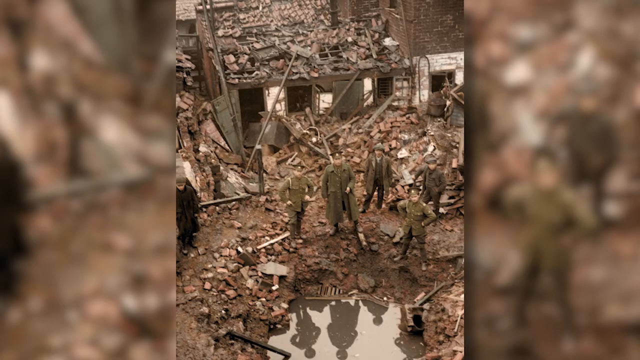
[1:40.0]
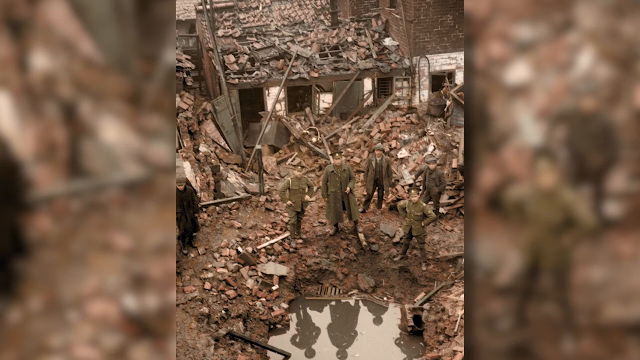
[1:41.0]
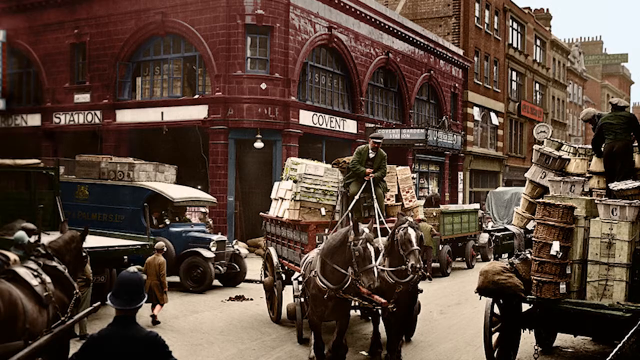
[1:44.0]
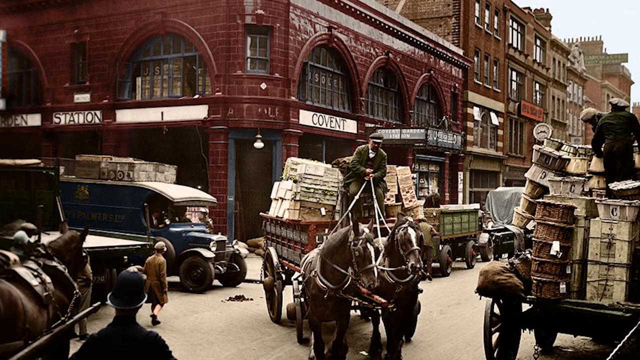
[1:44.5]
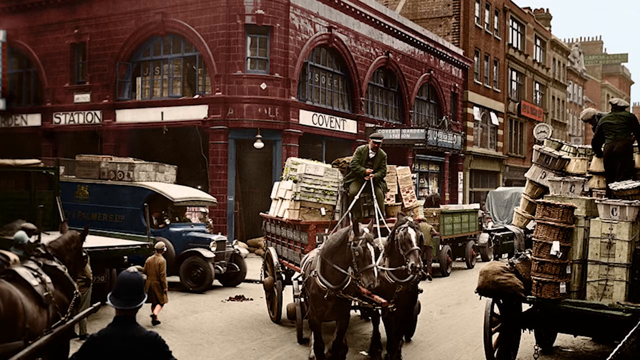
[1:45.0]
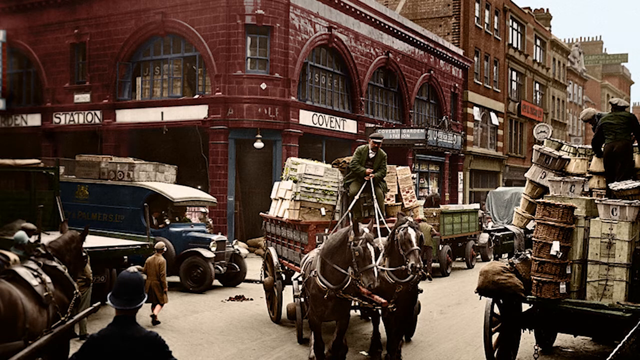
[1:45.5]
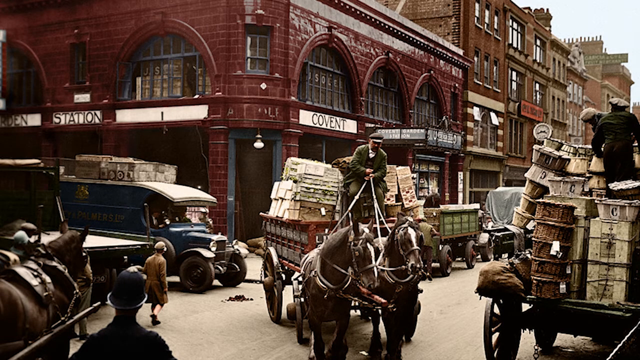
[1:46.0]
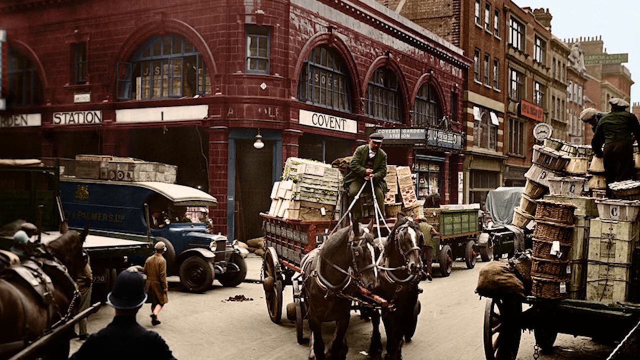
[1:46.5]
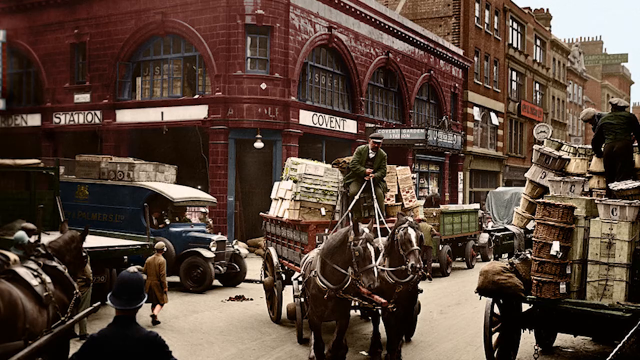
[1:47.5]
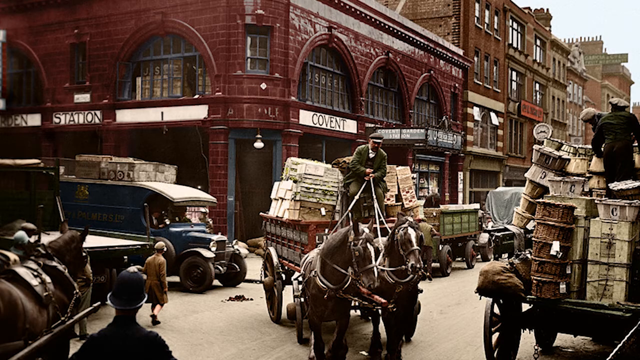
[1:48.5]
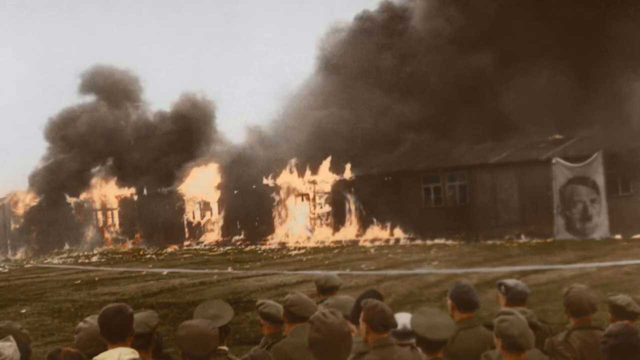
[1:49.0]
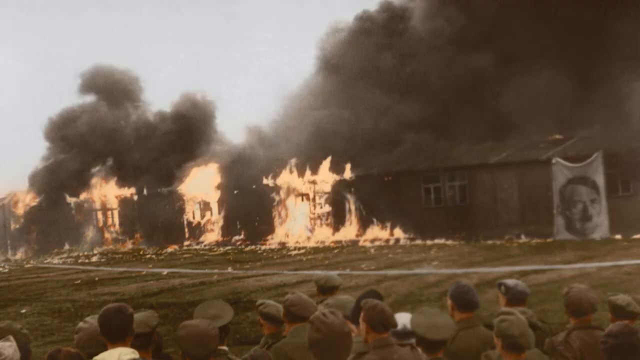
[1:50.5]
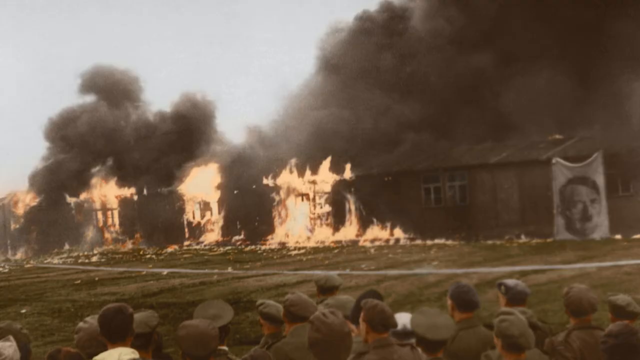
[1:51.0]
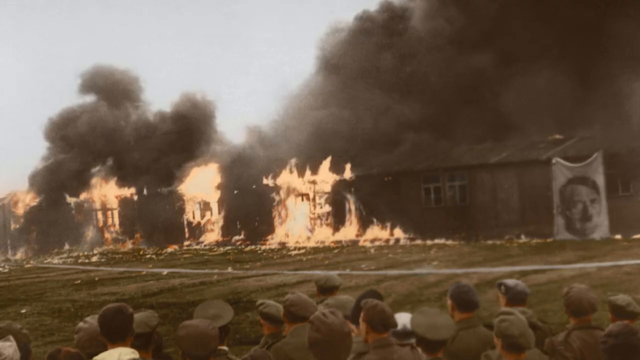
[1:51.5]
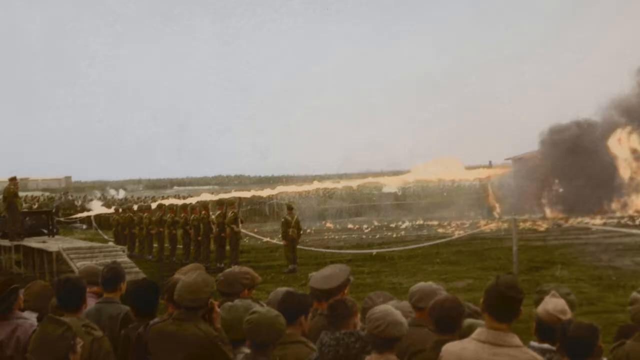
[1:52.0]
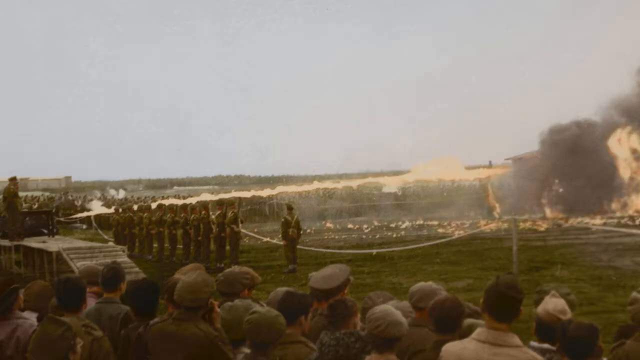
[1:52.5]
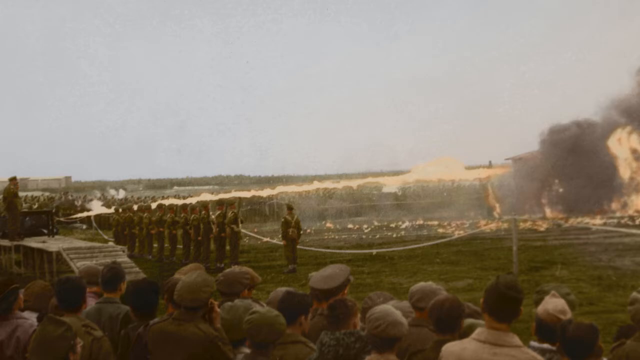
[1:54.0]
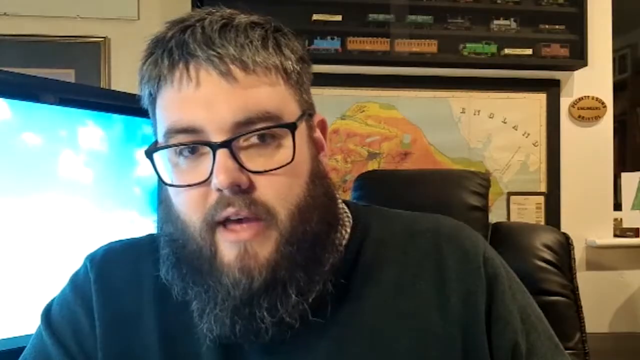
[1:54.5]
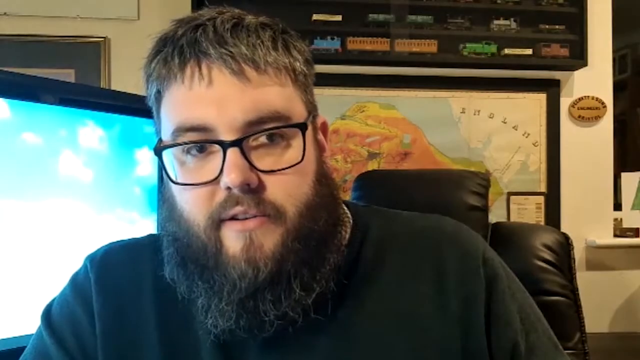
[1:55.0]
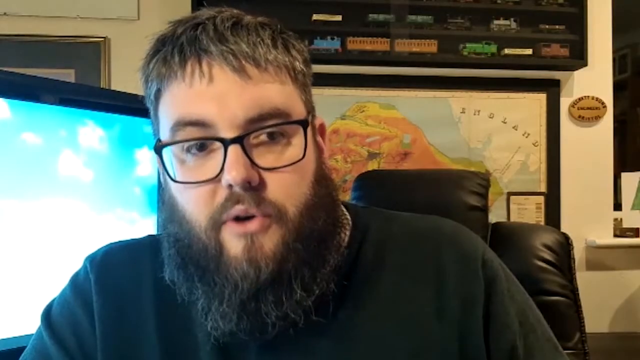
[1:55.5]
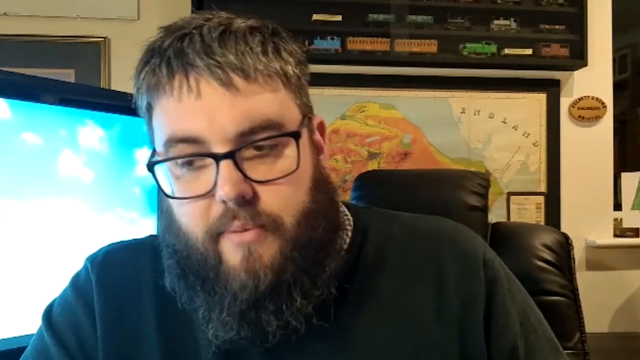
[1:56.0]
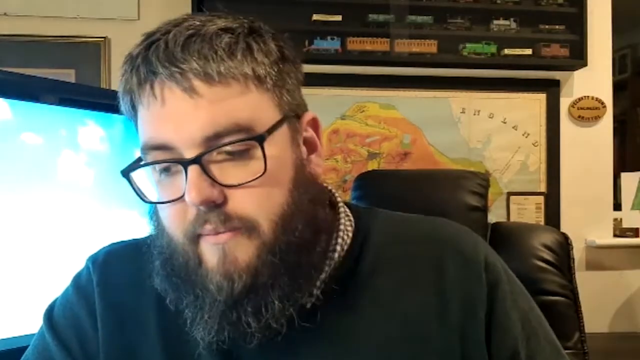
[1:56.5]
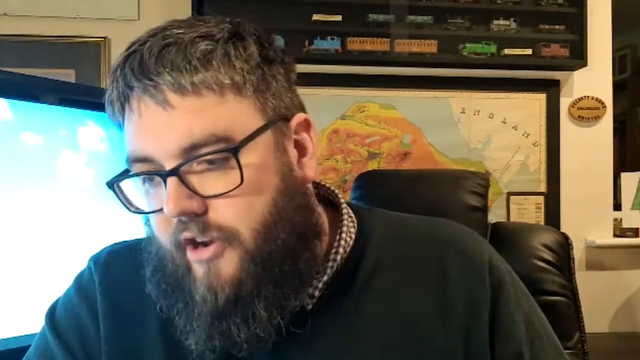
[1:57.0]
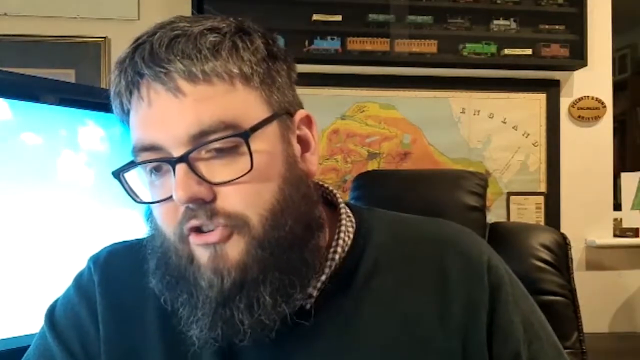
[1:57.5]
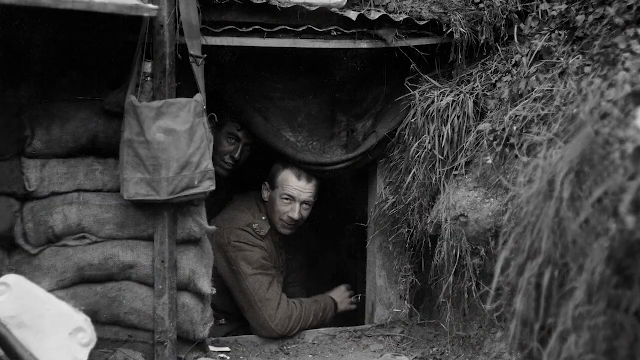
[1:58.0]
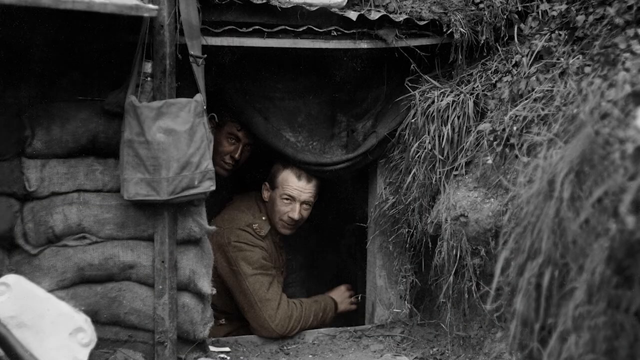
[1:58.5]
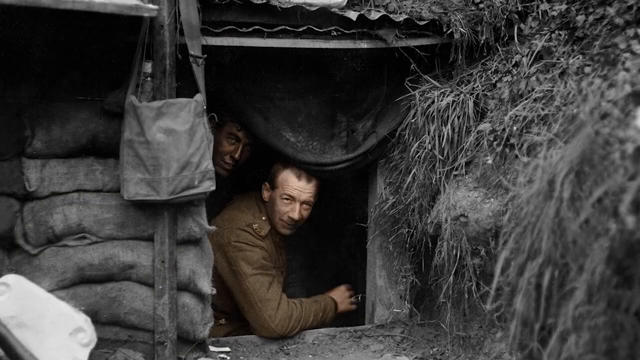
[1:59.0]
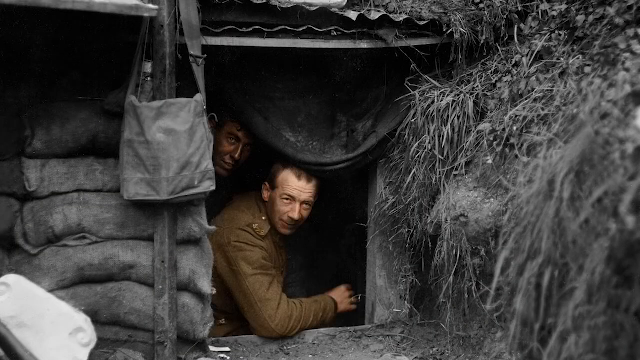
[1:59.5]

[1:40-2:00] A black-and-white picture goes into color, showing two people in what looks like a cave or some type of makeshift building. Devastation from what may have been a bombing is shown: a destroyed building or house is still standing but has a lot of debris on top, its roof is gone, and there is a lot of wood and what looks like brick. Four or five people stand facing the camera, wearing green outfits that could be military green. Next is a color picture of a reddish building with "convent" on it, with horses and buggies, a few cars possibly from the 1920s or 1930s, a wagon being pulled, and other buildings on the left side of the street; something says something "station". Then buildings are shown on fire, with a picture of Hitler on the right side, suggesting it could be Germany. The view shows a lot of fire and smoke, many people standing at the bottom of the screen, and bluish skies. The video returns to the man with the beard and glasses speaking.